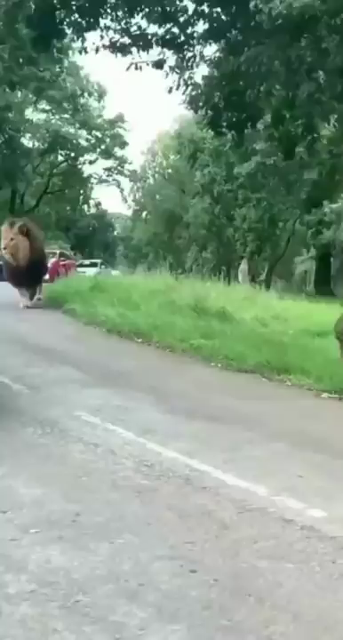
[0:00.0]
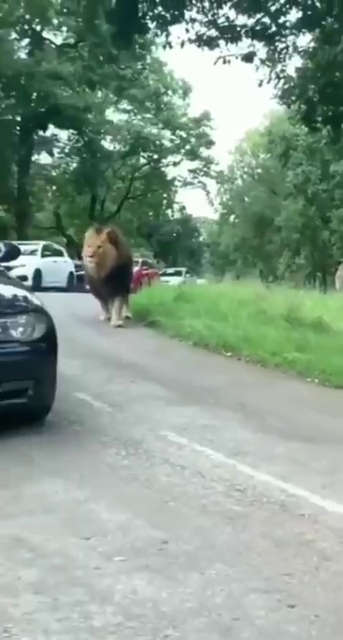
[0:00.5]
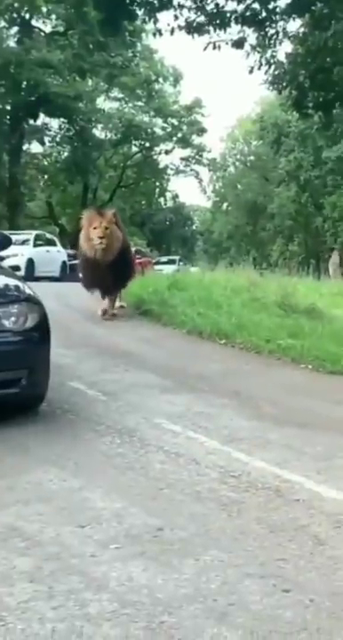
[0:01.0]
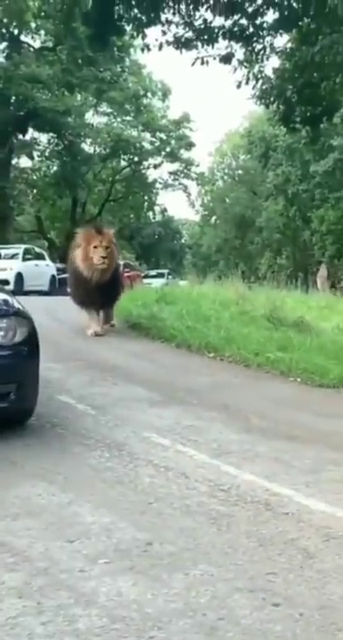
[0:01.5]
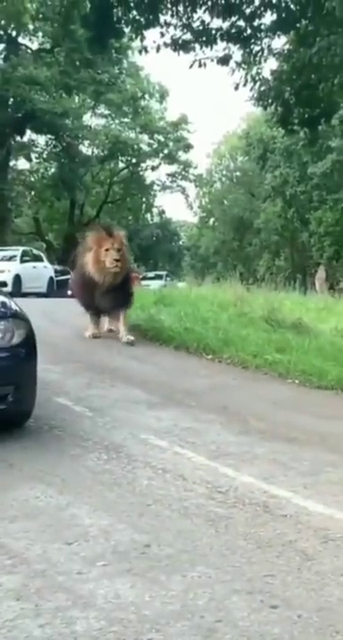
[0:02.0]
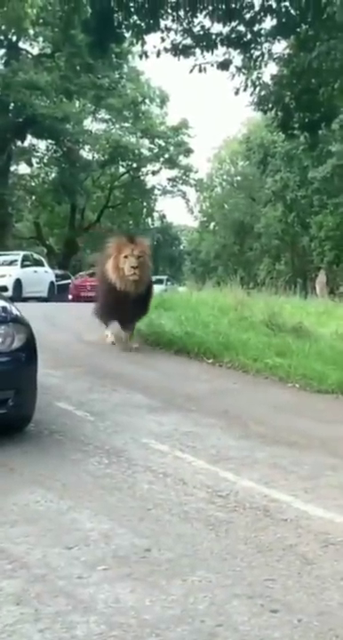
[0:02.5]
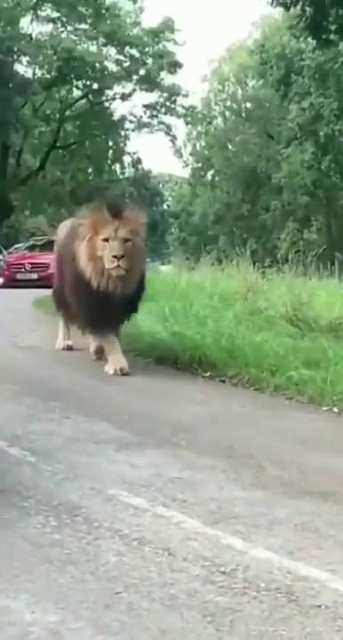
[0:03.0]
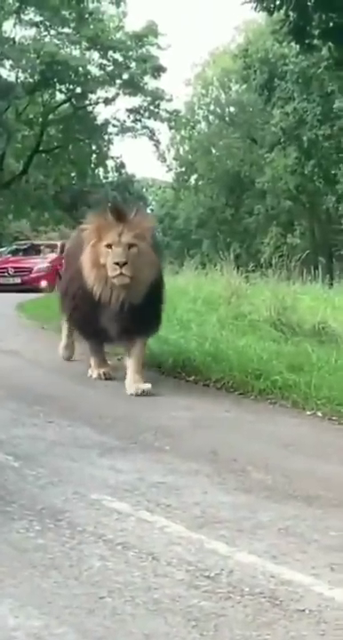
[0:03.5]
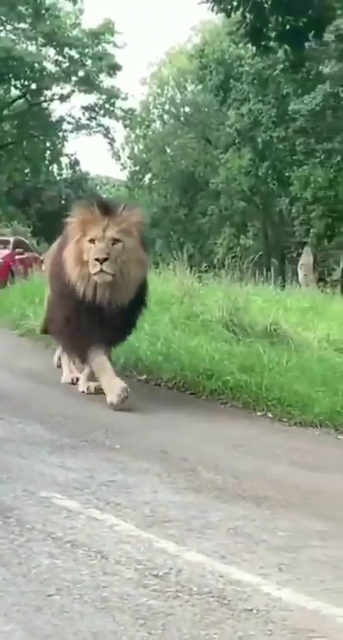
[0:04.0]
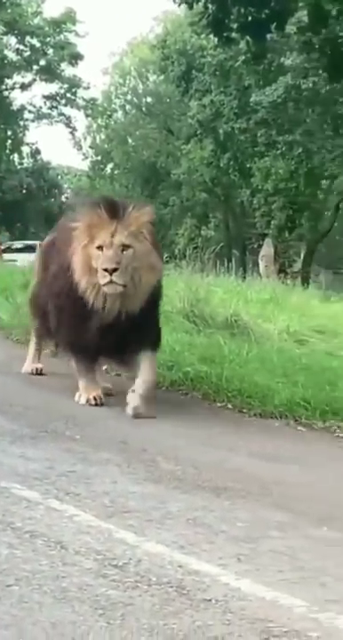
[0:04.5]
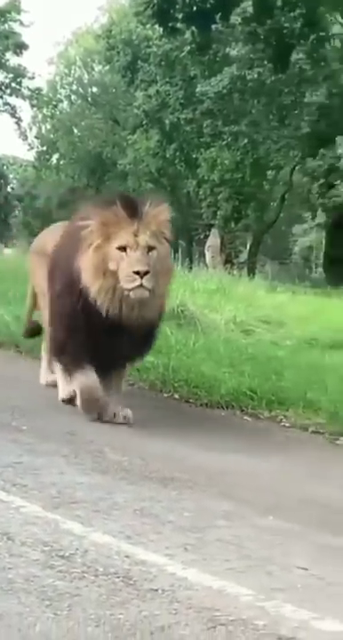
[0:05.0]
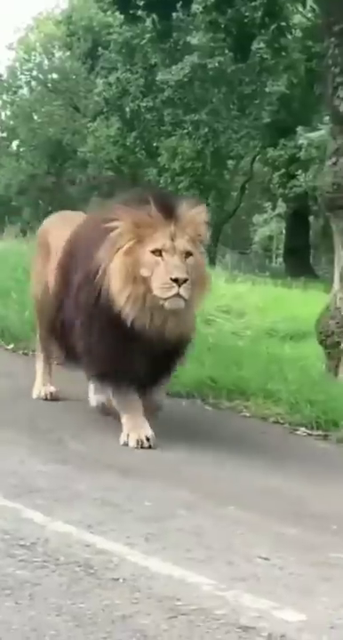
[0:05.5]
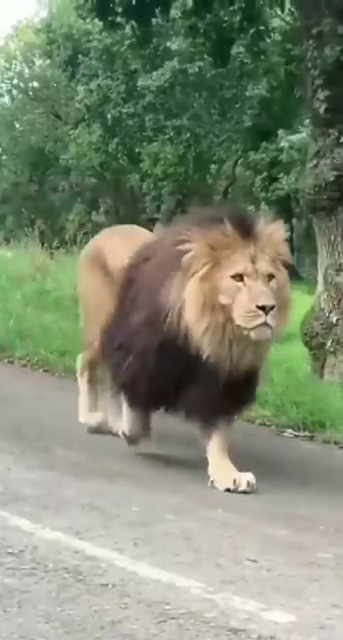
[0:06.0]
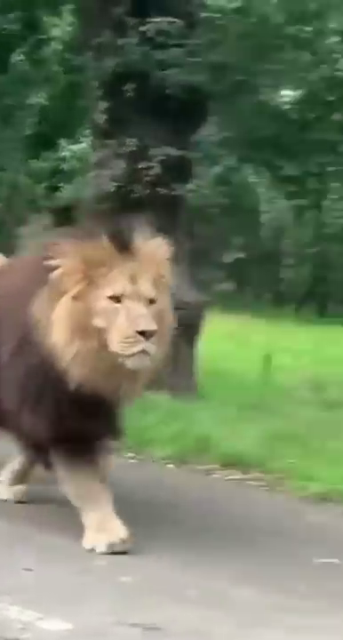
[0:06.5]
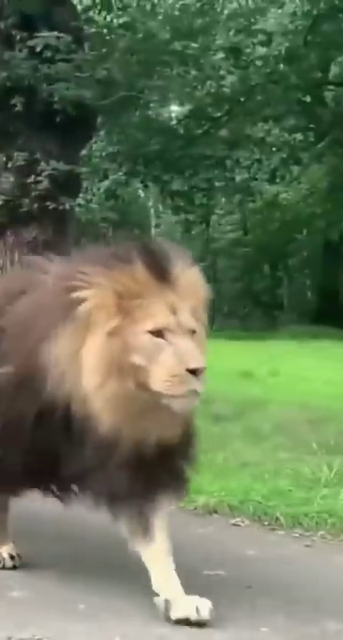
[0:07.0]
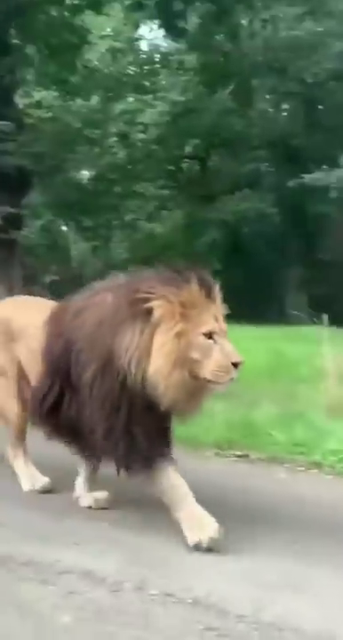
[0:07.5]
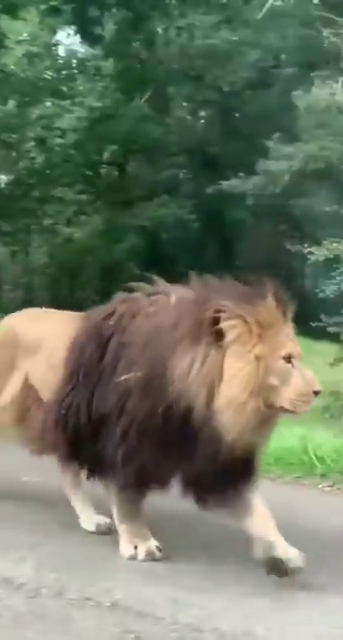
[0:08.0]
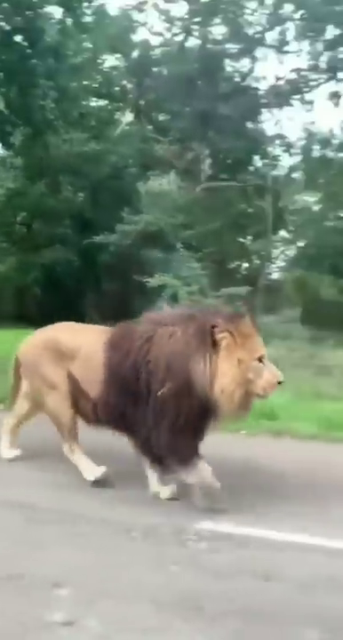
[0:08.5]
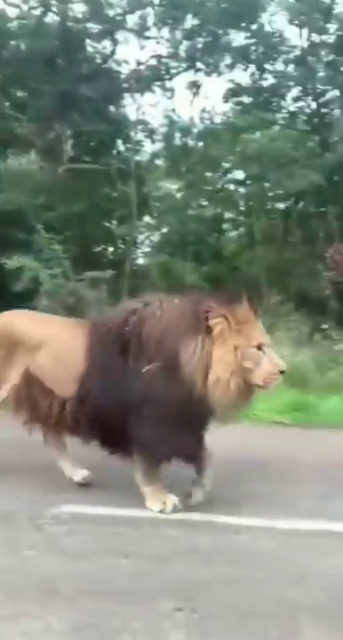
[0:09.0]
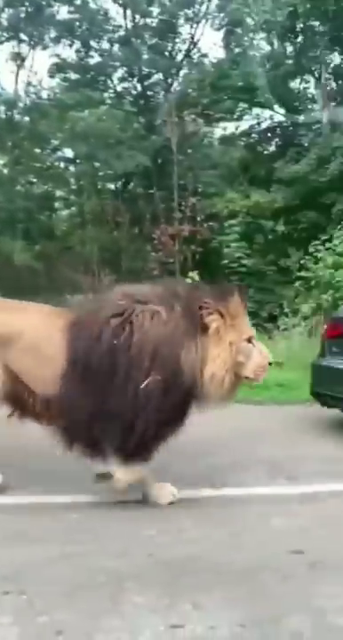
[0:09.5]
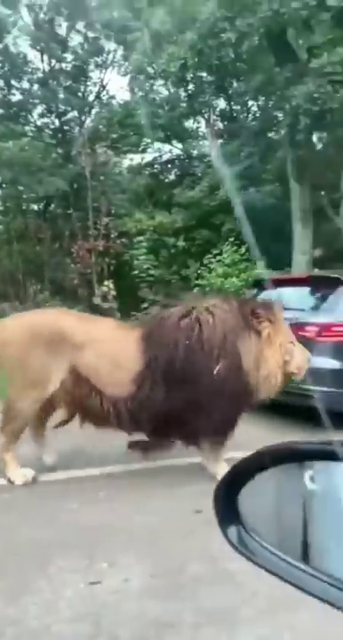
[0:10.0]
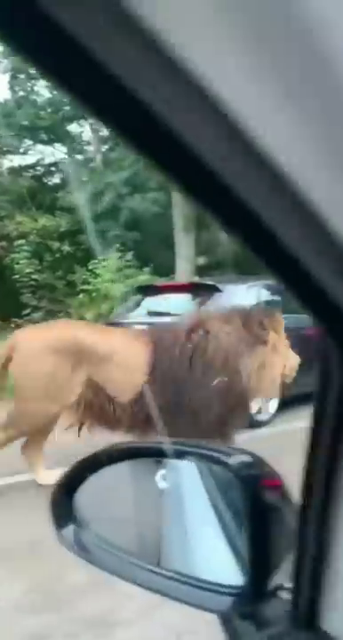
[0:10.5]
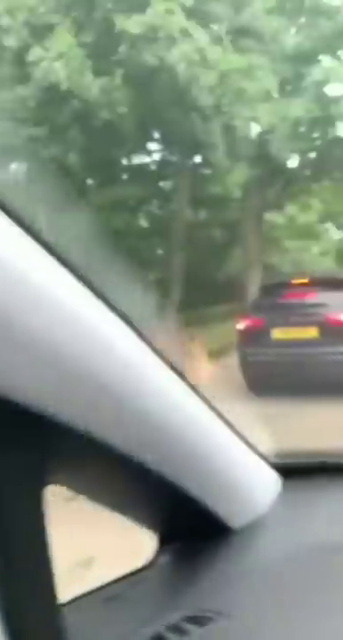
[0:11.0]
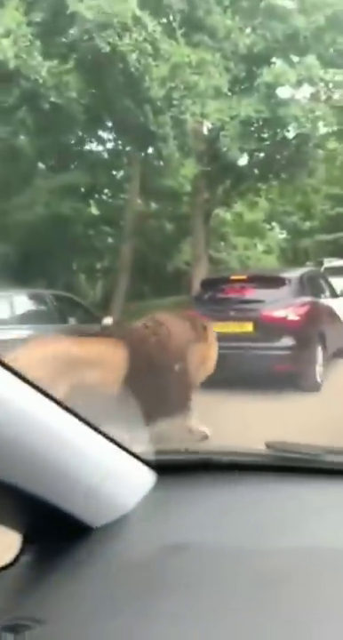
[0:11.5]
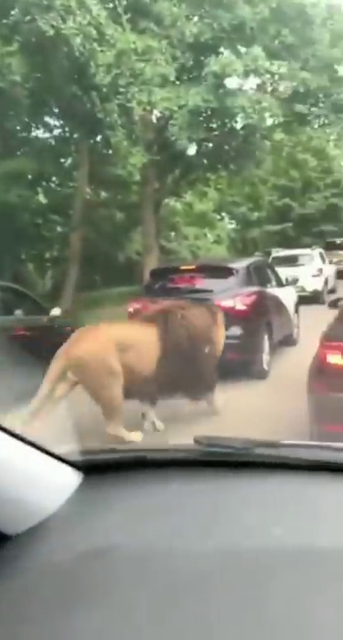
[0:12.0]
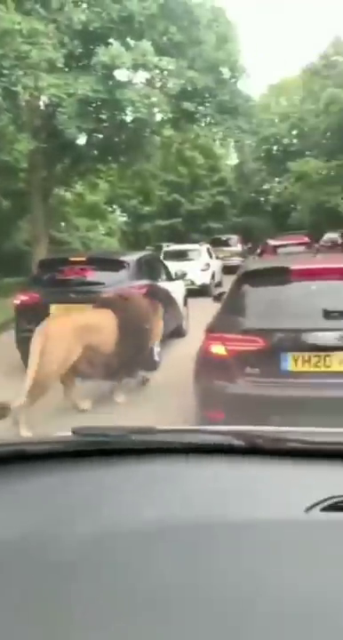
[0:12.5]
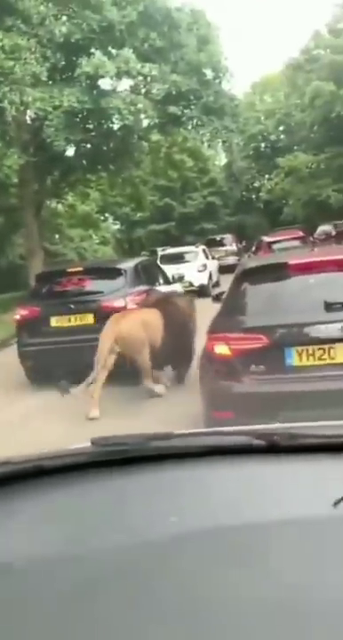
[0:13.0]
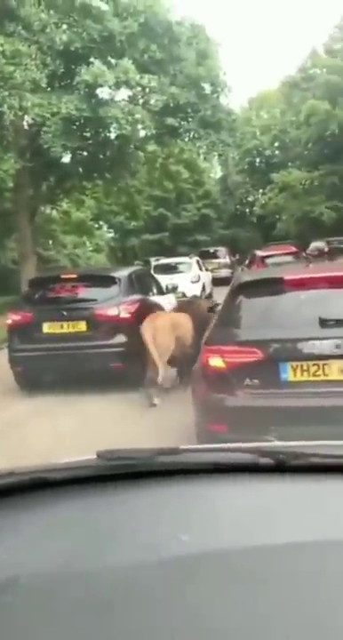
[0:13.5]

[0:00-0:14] The video is titled Alimola, Alimola, Alidamdam. It opens with a huge lion with an enormous mane around him, walking alone down a street. He walks by some cars with foreign license plates that look almost like European plates, suggesting the location is not the United States. He passes some long grass and some trees, strolling down the middle of the road. There are no signs and nothing shown that indicates what the land is used for, so it is unclear whether it is a park. Several cars are parked on either side of the road. The lion strolls and struts very peacefully and calmly, looking around from side to side, and he looks very sleek. His mane is two different colors: tan toward his face and a dark brown over his shoulders and covering his belly.